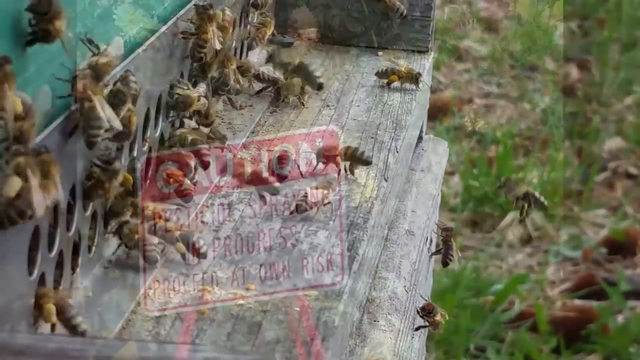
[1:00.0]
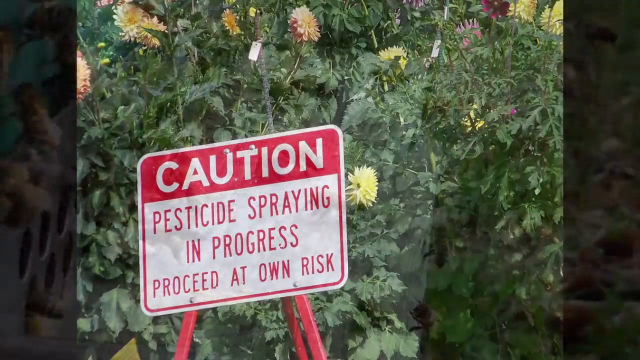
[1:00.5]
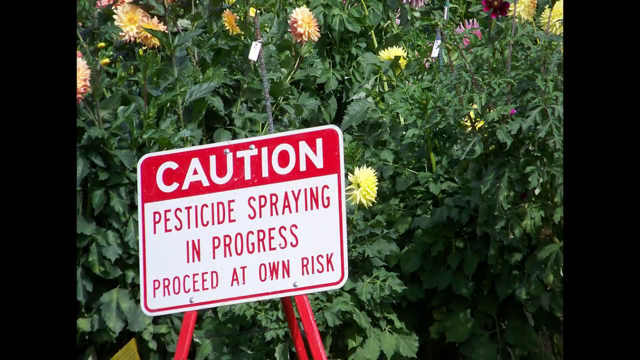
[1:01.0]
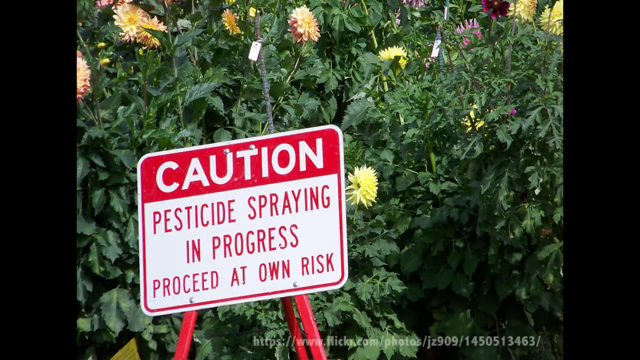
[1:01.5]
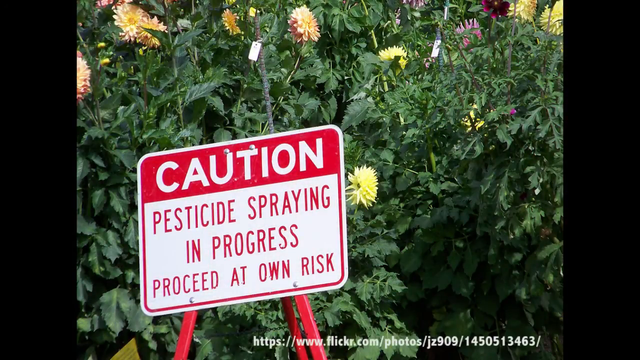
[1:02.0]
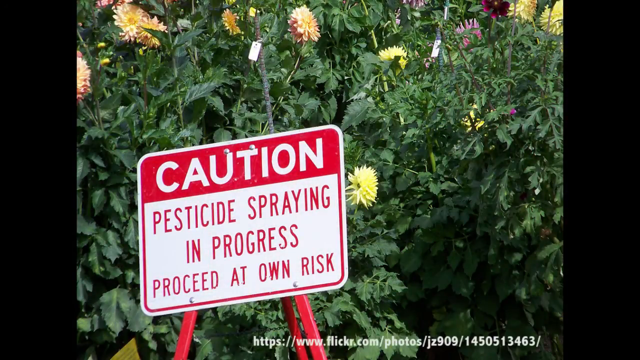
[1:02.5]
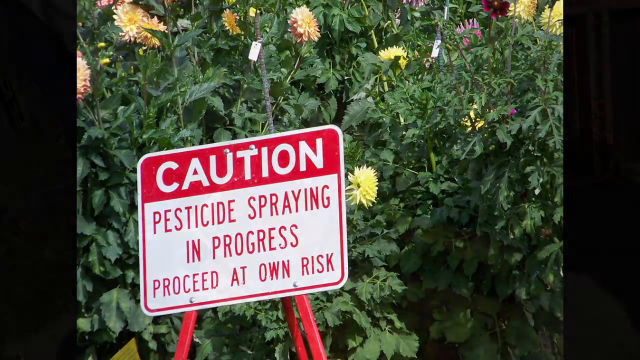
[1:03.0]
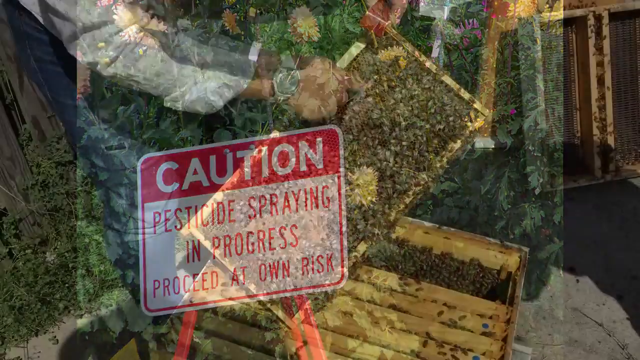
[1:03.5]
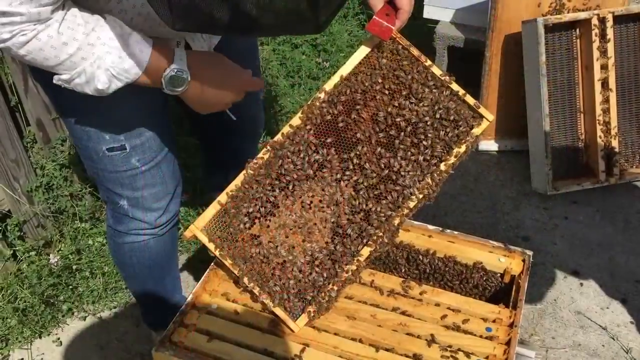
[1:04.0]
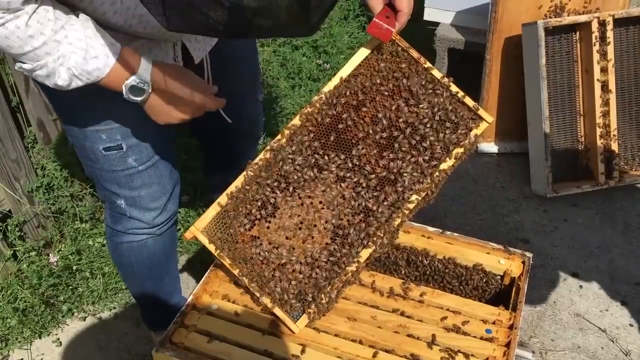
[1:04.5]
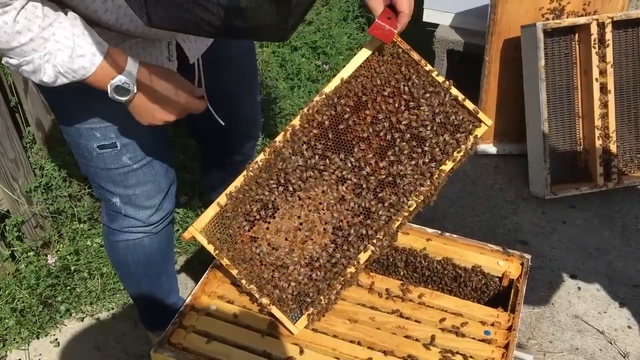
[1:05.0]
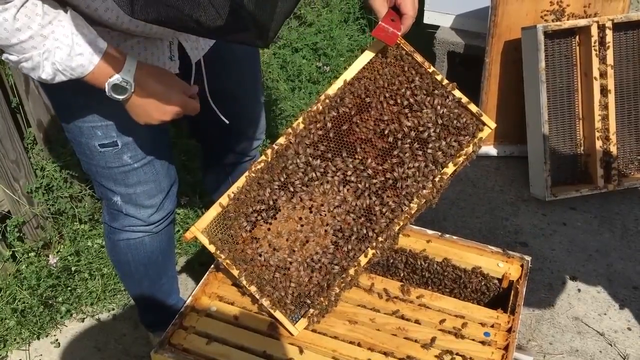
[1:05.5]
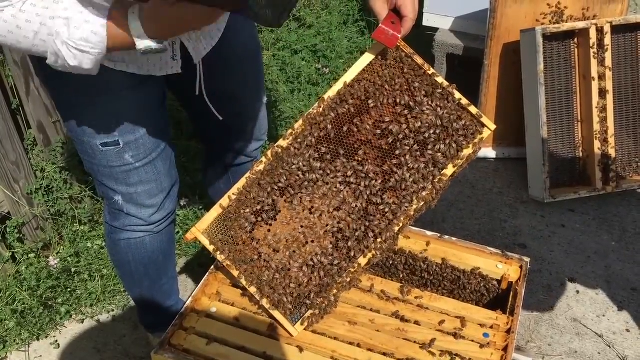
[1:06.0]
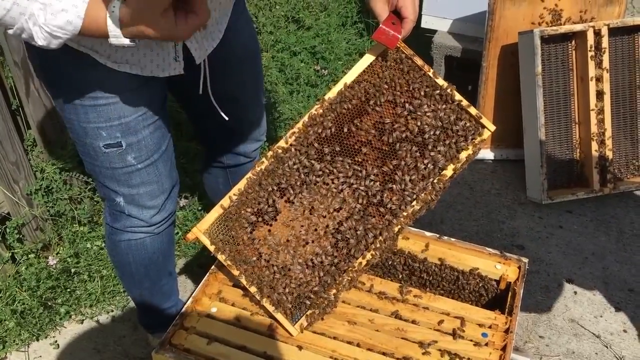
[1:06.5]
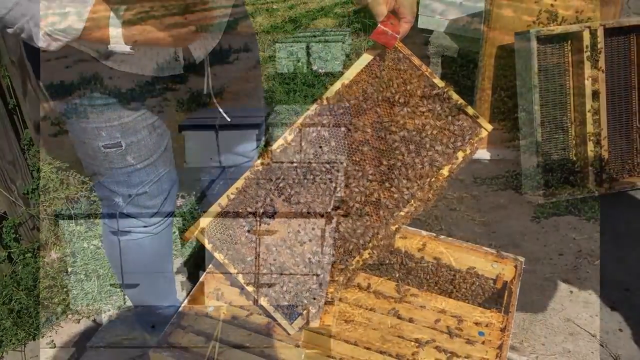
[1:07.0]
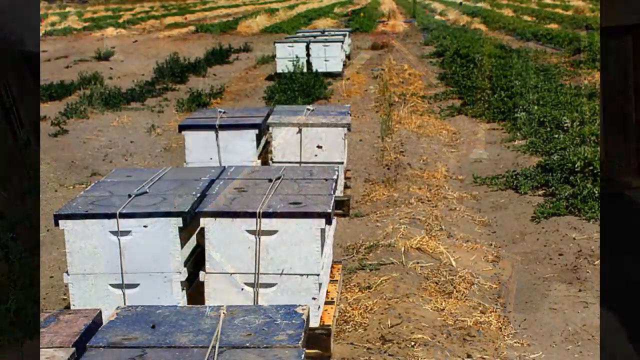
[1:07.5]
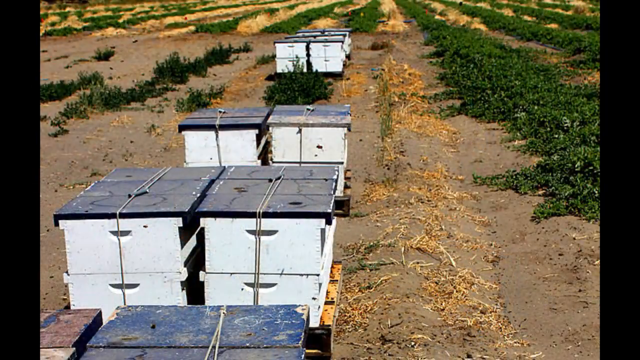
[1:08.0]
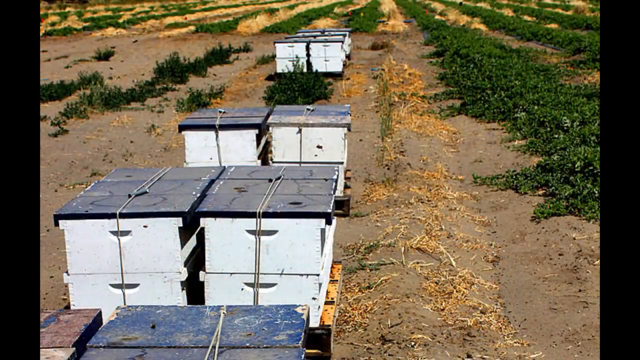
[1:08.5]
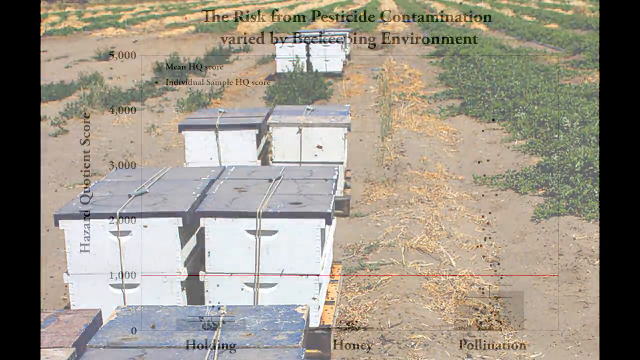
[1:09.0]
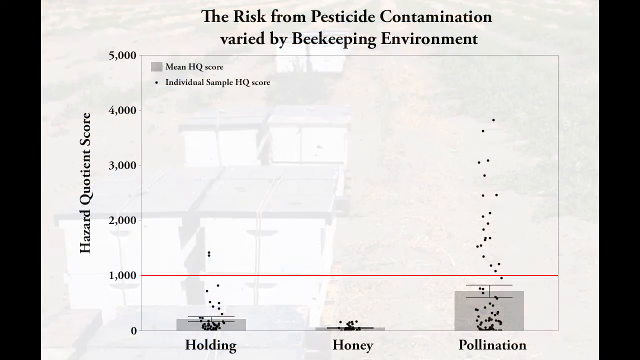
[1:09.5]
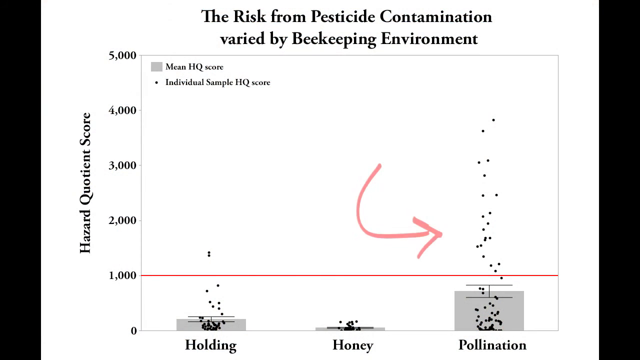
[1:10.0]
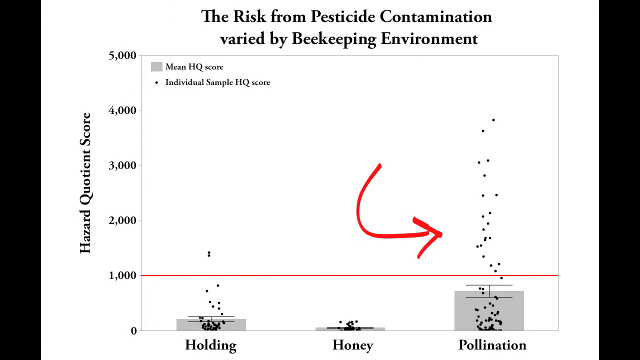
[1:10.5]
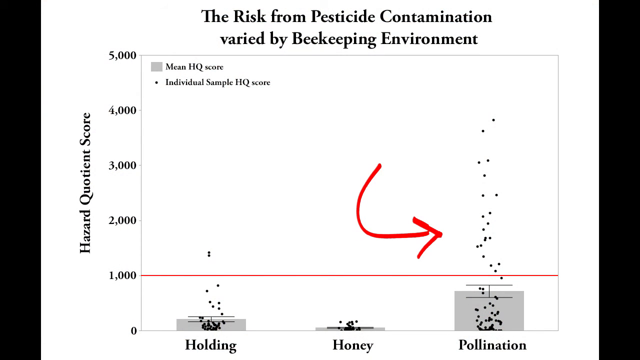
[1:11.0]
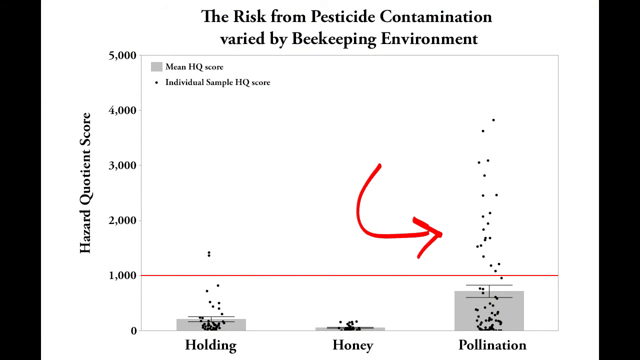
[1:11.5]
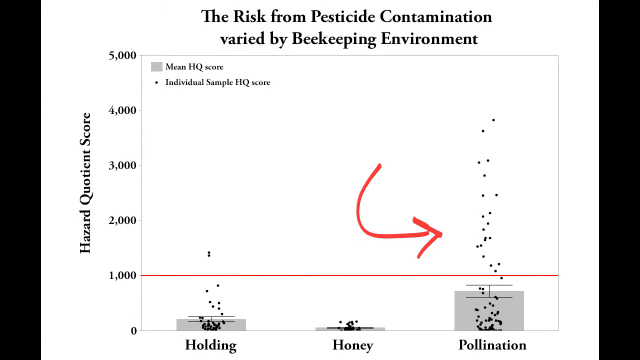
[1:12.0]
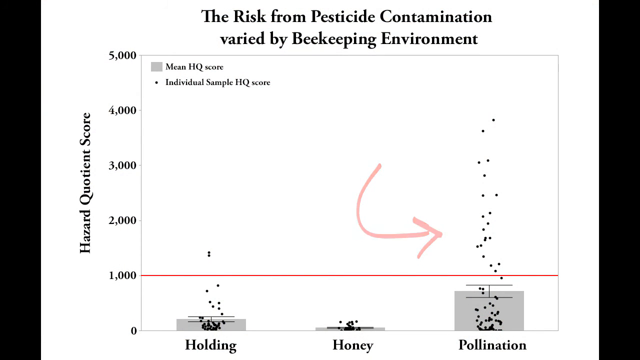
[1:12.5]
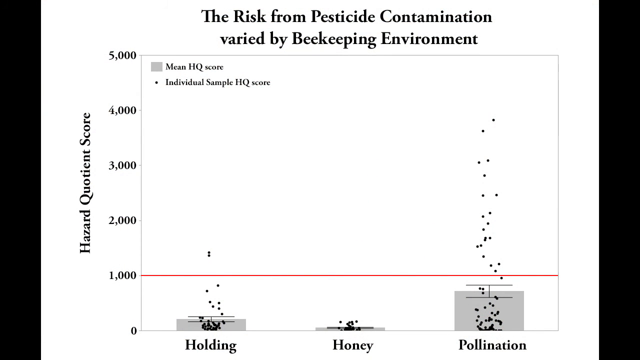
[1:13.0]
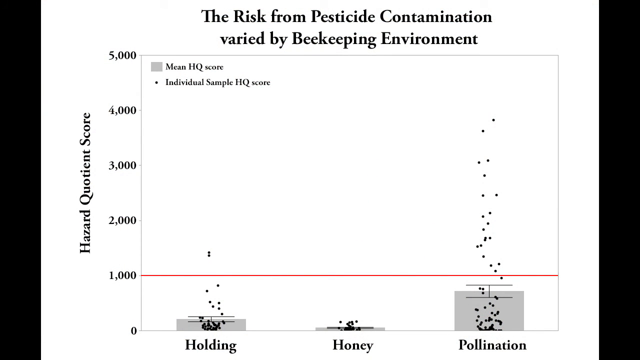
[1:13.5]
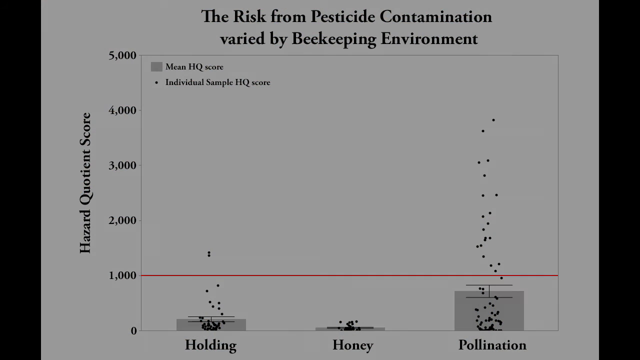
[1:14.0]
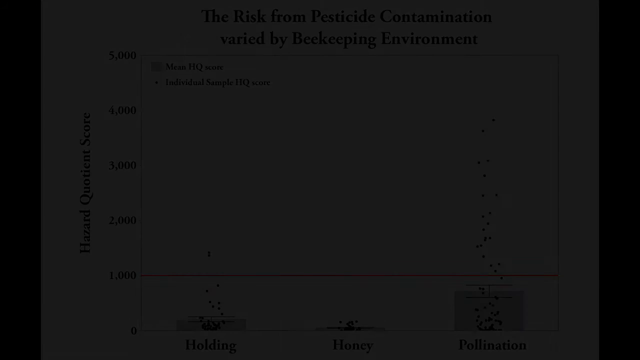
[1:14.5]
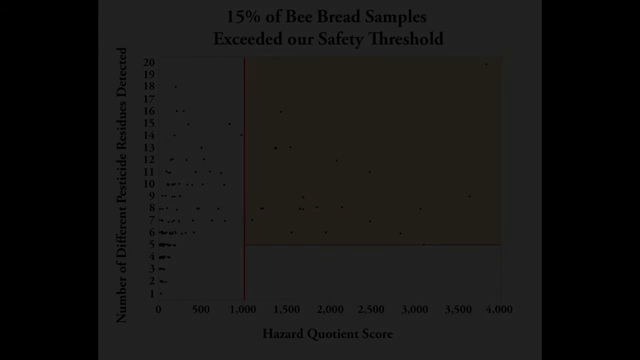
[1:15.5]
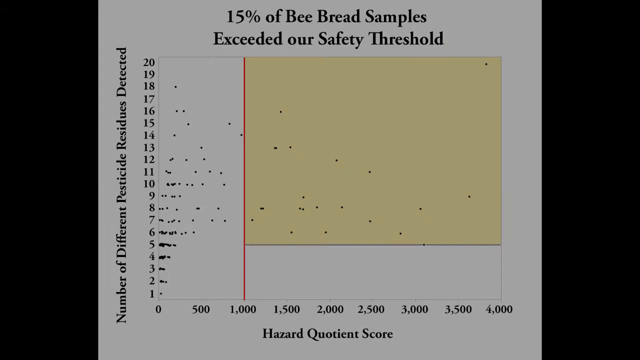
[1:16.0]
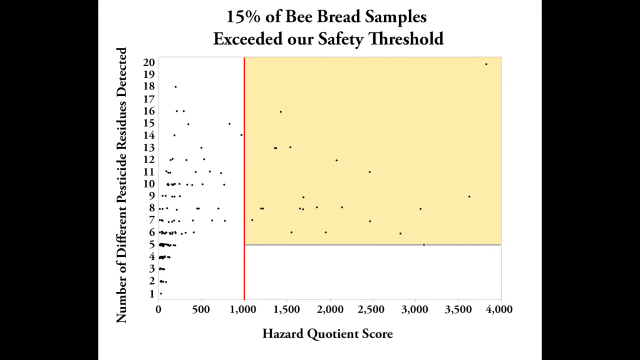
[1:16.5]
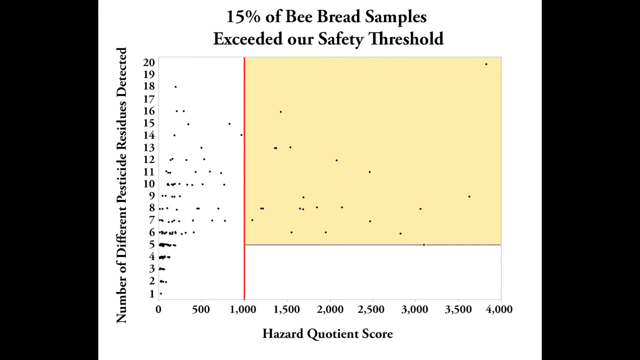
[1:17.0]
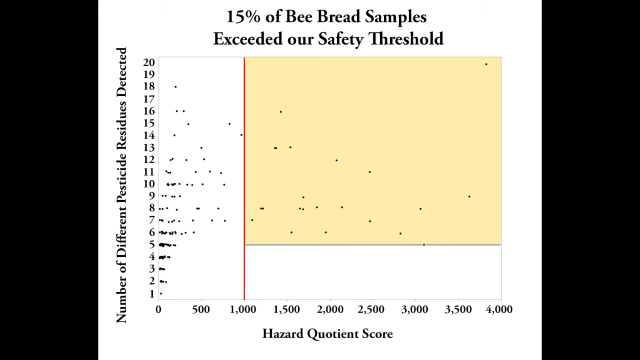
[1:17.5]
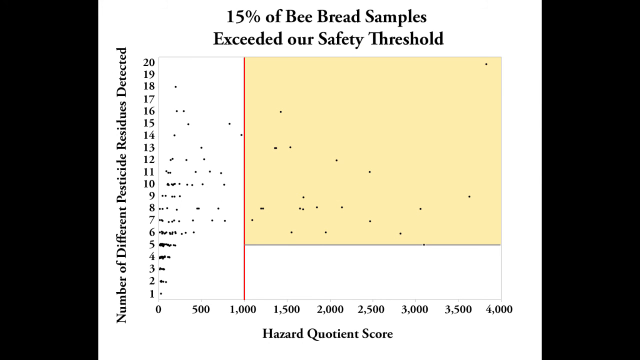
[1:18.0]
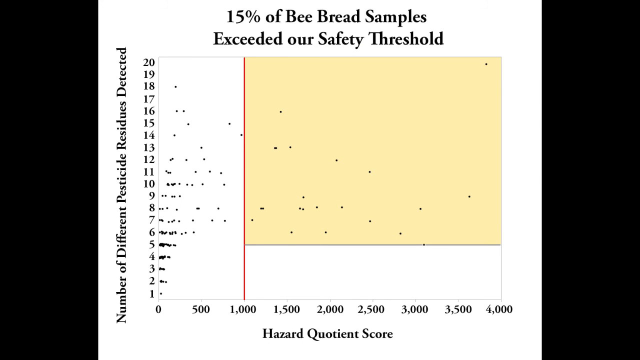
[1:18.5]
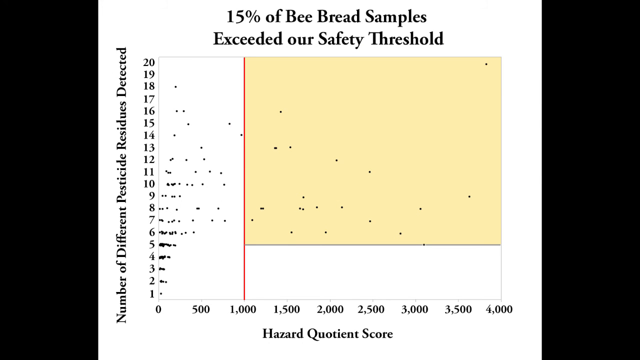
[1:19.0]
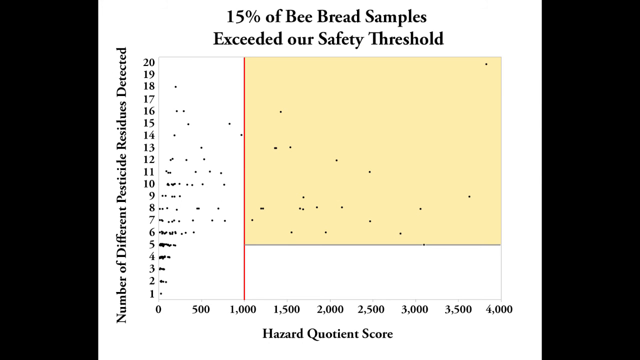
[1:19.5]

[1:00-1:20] Many bees go into an artificial home that appears to be on a lawn outside, consisting of a plank; perpendicular to the plank on the left is a flat metal piece with many half-inch holes drilled in it. A sign then appears in red font on a white background, shown against a green garden, reading "Caution! Pesticide spraying in progress. Proceed at own risk." Next, a beekeeper holds a flat piece of wood from a bee home that is swarming with honeybees. Many boxes of bee homes are shown. A chart then shows the risk from pesticide contamination varying with the beekeeping environment, with the hazard quotient score rising steeply for some environments and staying low for others. Another chart reads "15% of bee bread samples exceeded our safety threshold."